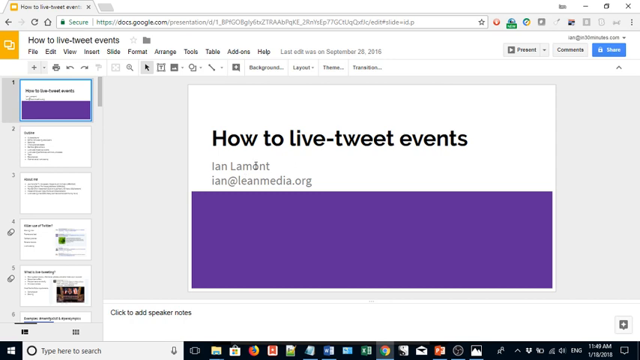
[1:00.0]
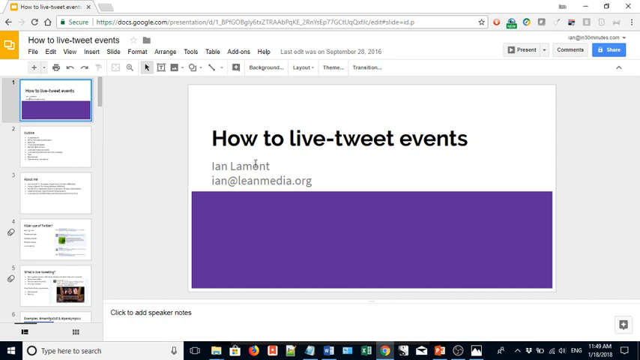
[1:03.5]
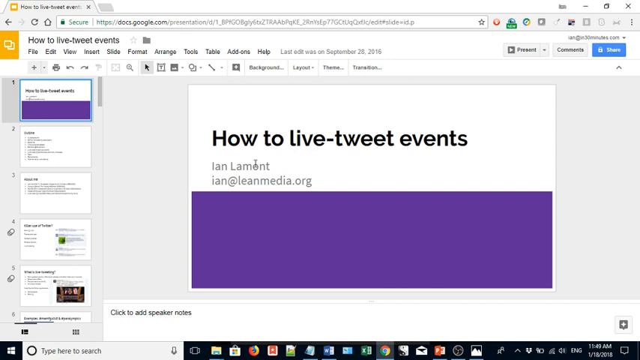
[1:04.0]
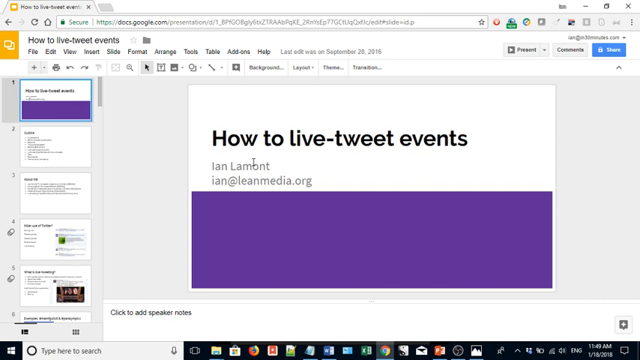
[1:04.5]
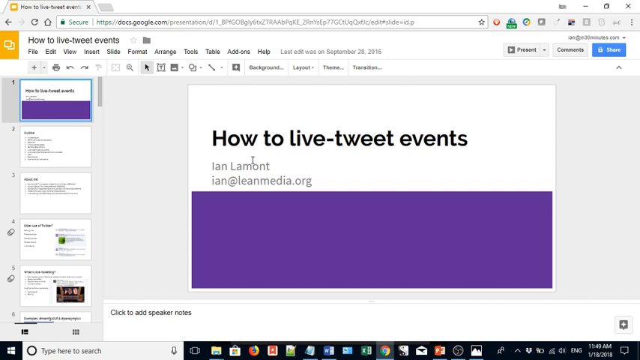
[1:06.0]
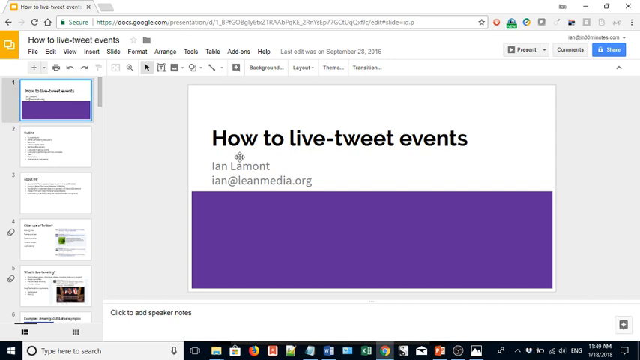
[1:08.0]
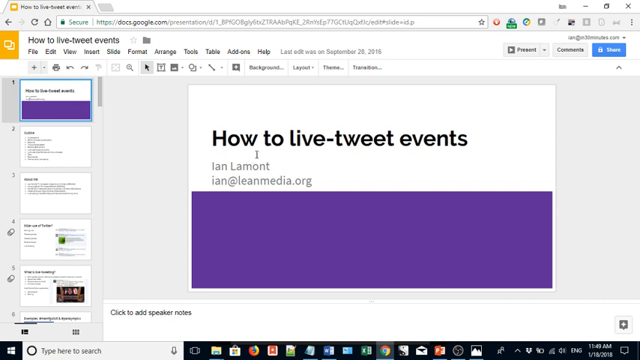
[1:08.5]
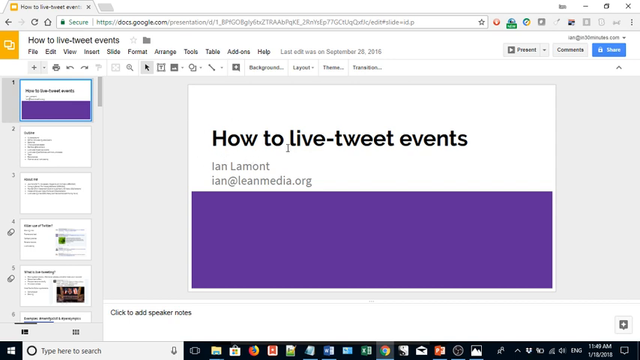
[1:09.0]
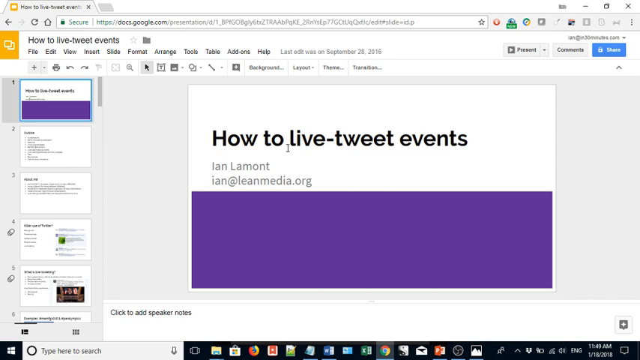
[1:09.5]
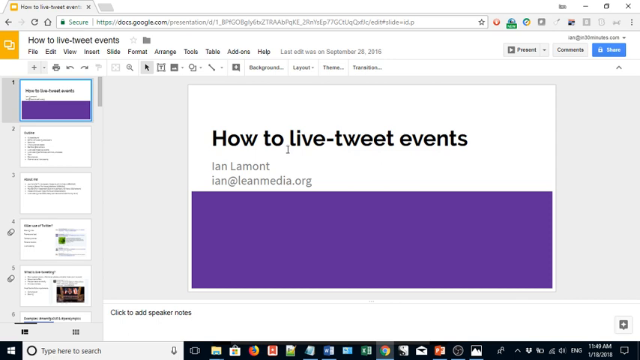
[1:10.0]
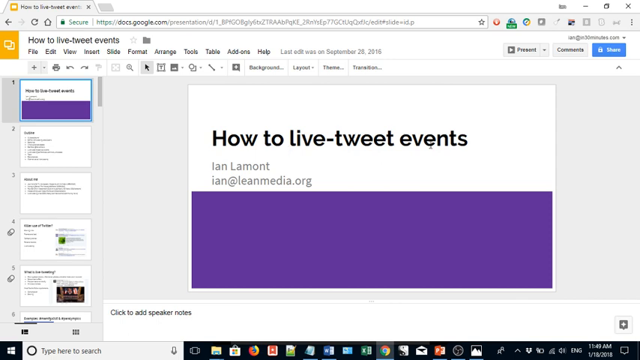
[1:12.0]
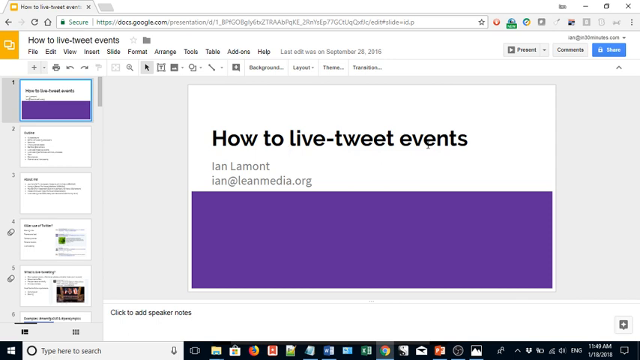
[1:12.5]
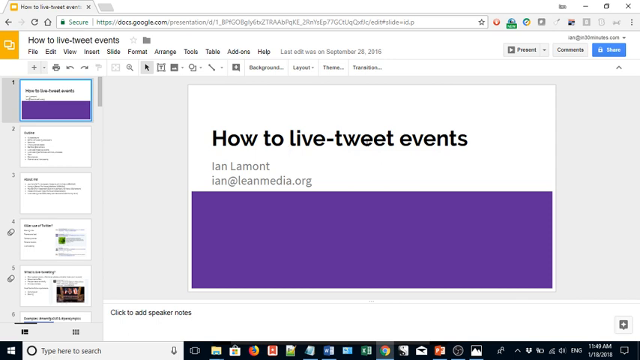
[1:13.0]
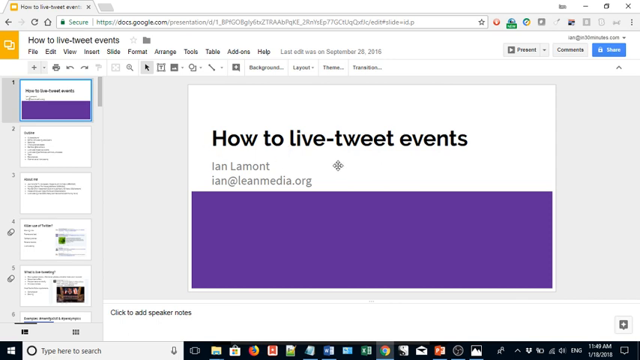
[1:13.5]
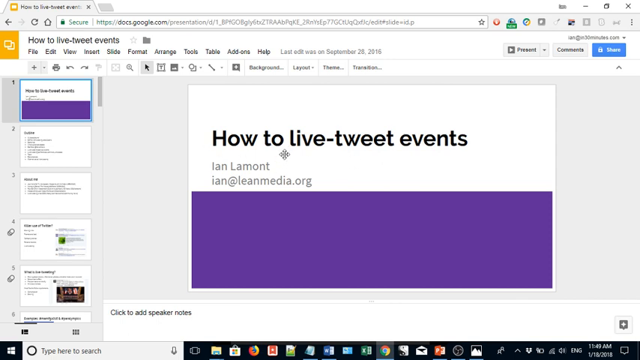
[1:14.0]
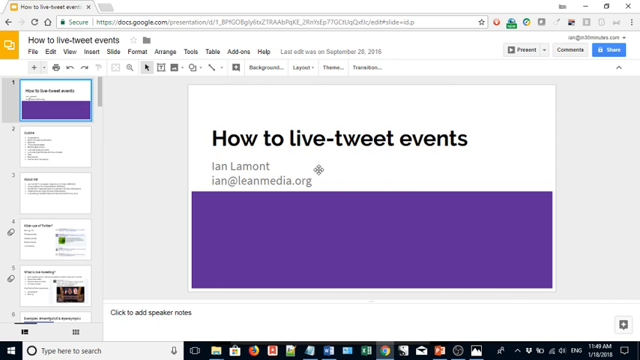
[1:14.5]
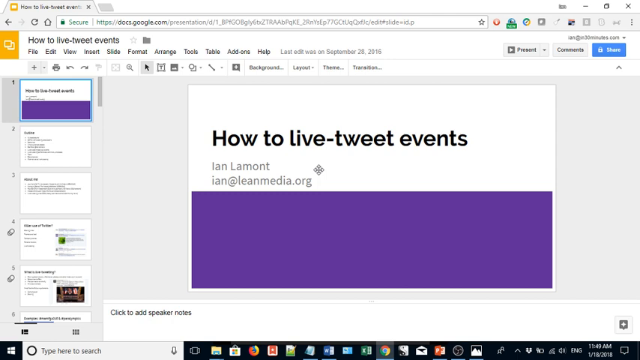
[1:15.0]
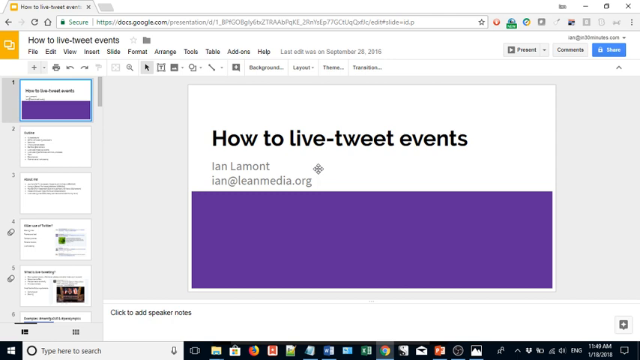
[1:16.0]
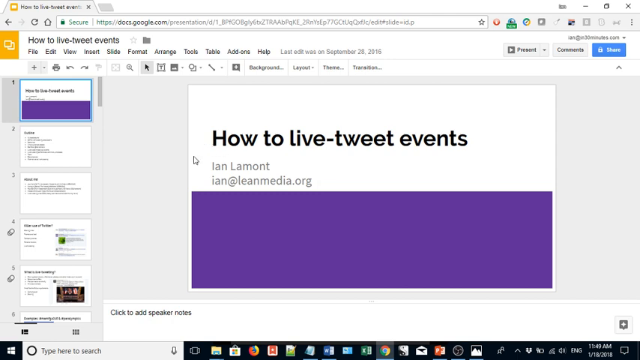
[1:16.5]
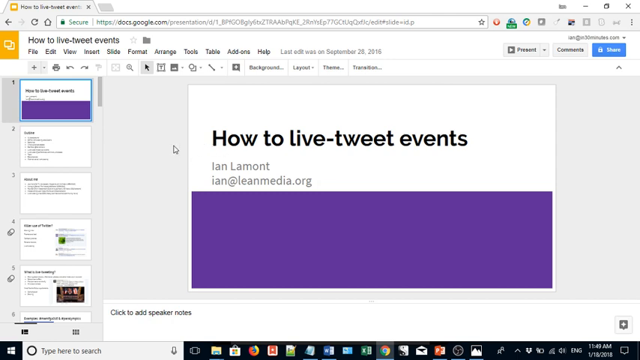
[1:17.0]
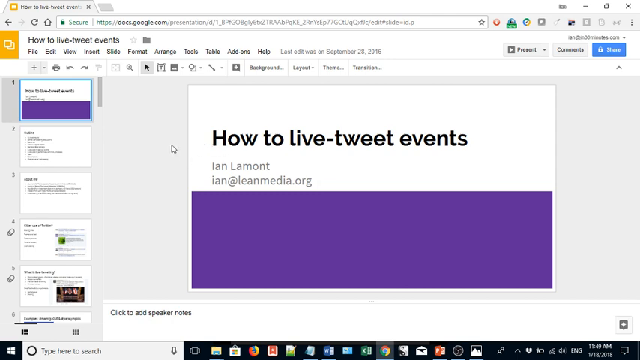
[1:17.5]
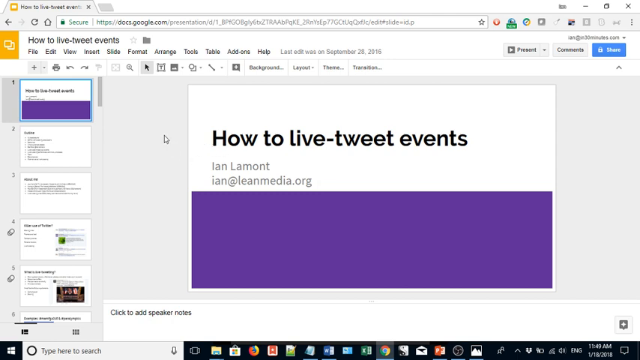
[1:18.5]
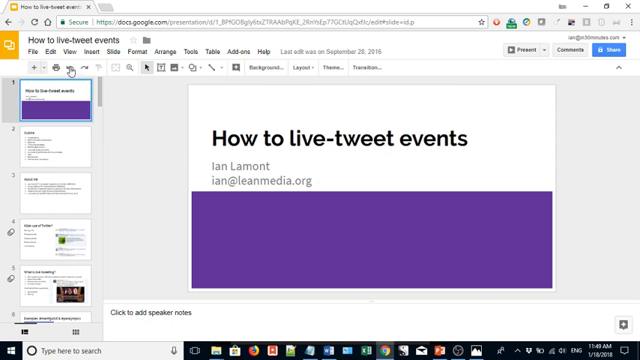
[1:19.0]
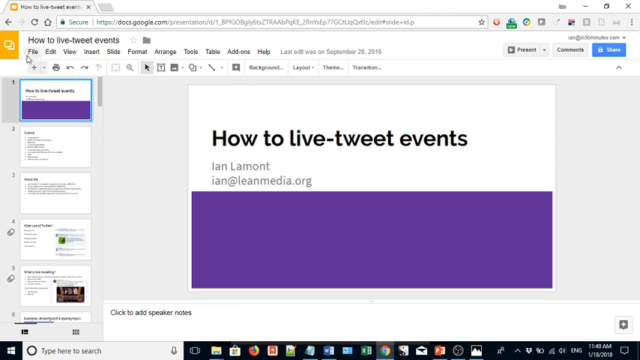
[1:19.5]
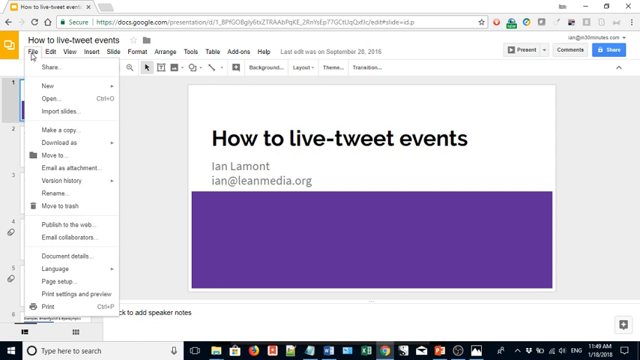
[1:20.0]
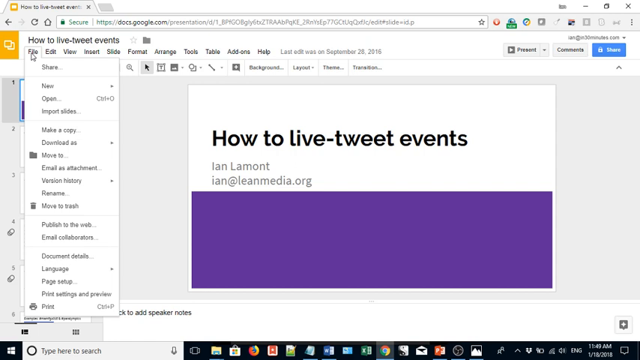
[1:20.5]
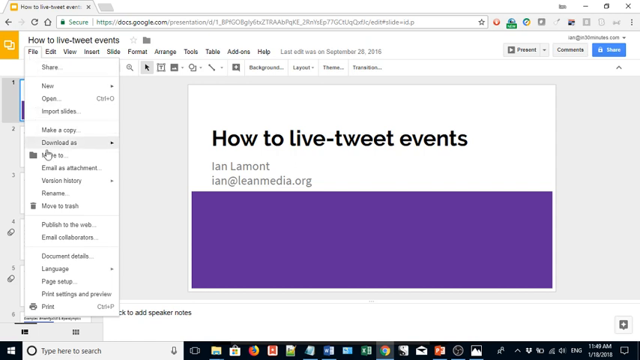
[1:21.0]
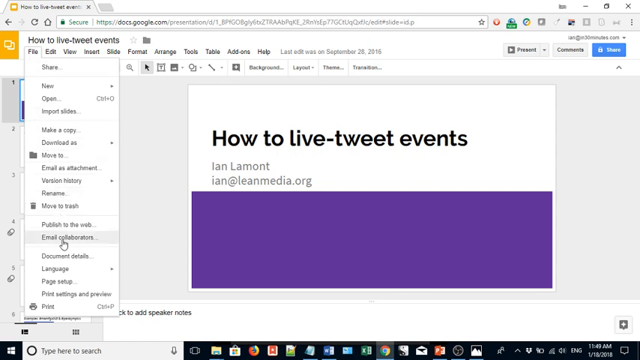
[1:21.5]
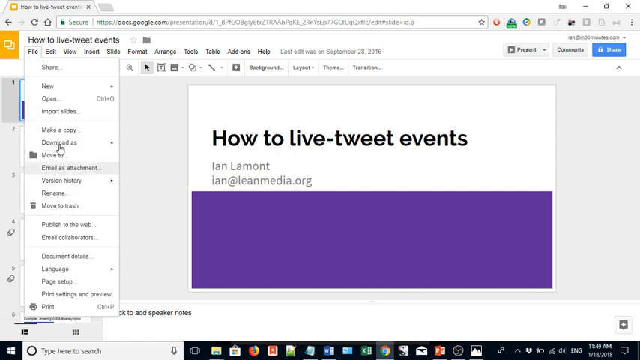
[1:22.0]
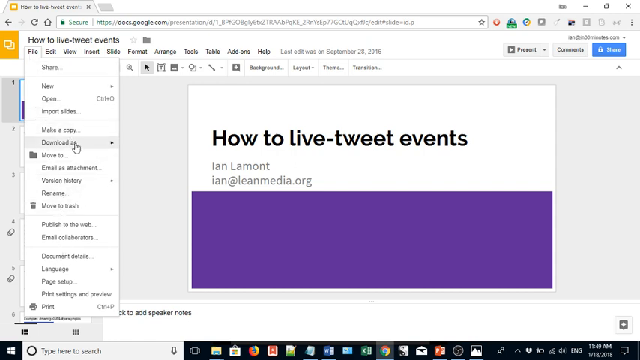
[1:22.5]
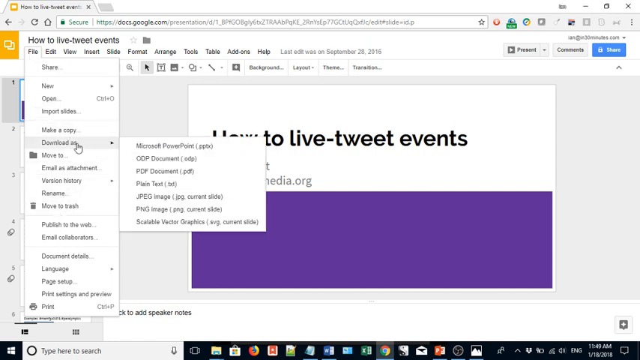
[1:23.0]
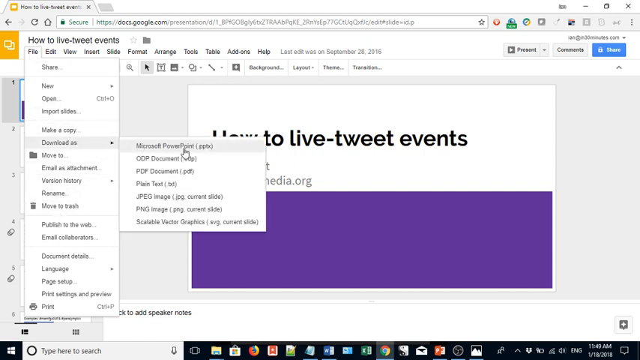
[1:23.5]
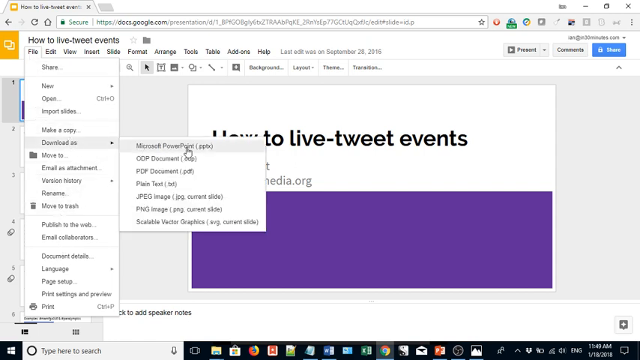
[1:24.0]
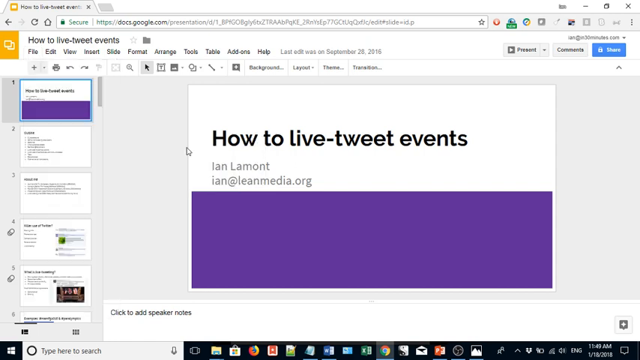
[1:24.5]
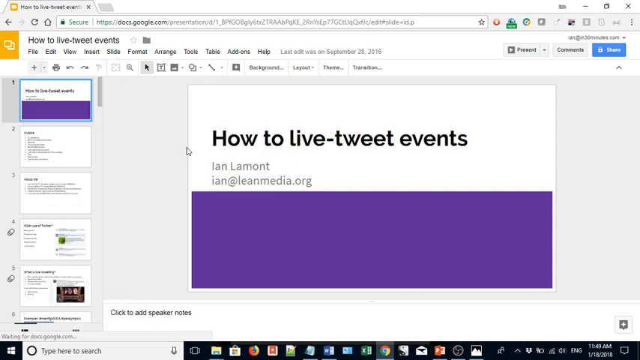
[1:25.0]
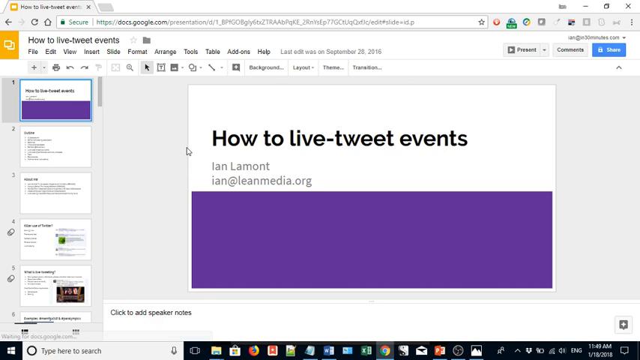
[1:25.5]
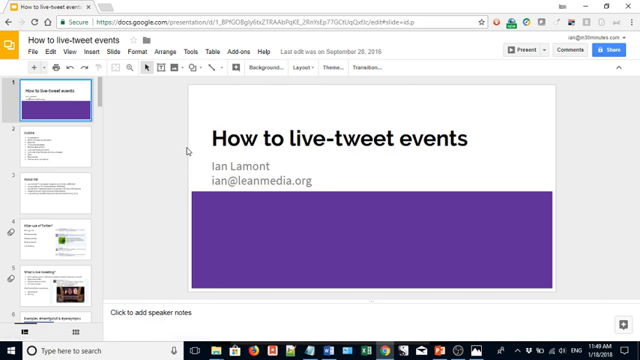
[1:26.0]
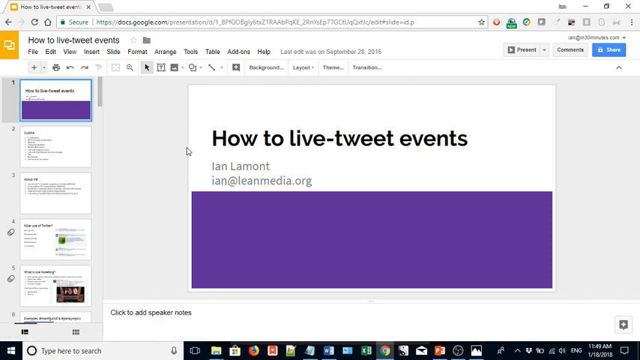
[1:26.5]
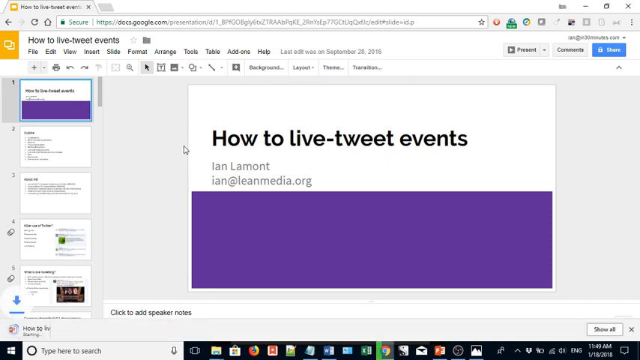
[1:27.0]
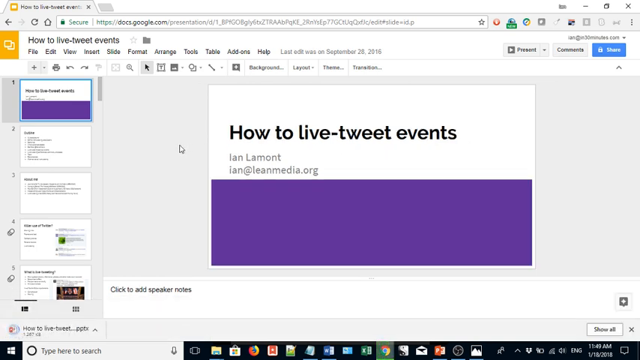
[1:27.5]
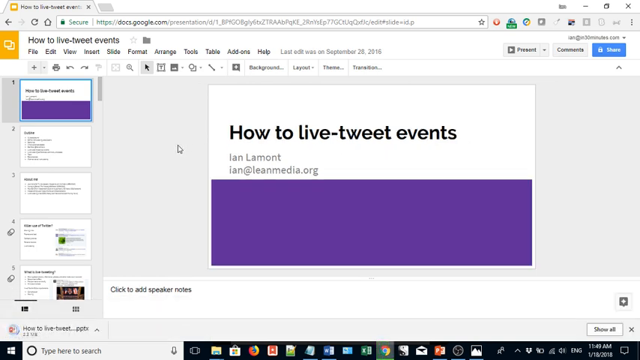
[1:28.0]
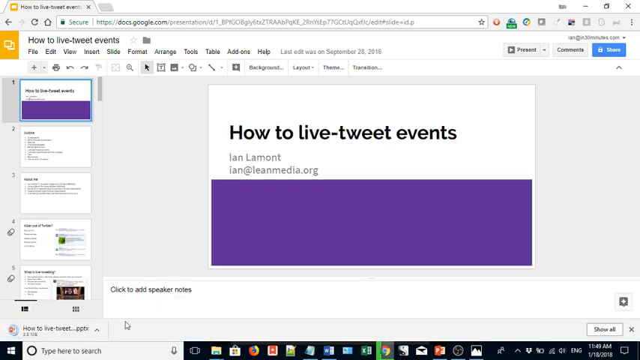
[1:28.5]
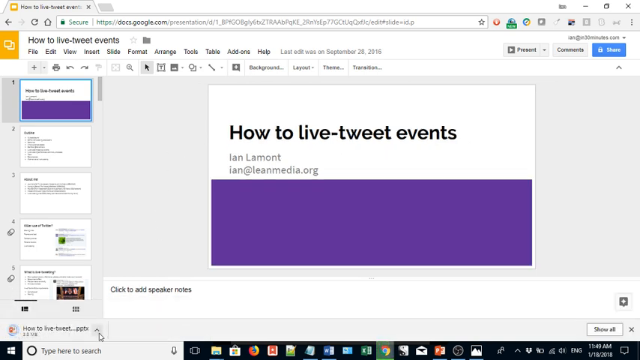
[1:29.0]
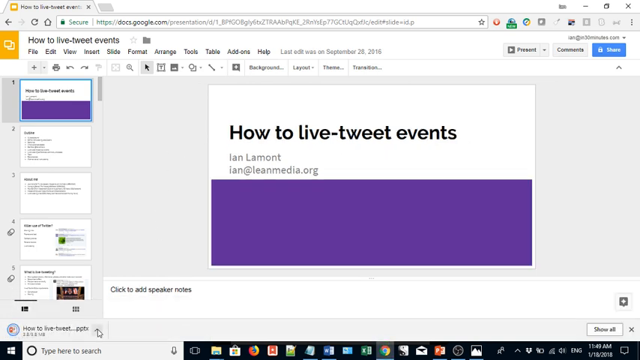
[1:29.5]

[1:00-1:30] A browser is open to a Google Docs presentation with the title "How to live-tweet events" in the top left corner. Slide one is open, with a white background, a heading at the top in black text reading "how to live-tweet events," and below it on the left, in smaller black text, "Ian Lamont" followed by the email "Ian@leanmedia.org." A large purple block covers the bottom half of the screen. The cursor clicks File in the top left menu, a menu drops down, and the user hovers over the "download as" option, which opens another menu to the right. The user selects Microsoft PowerPoint. A gray rectangular box then pops up at the bottom of the browser showing that a PowerPoint file titled "how to live-tweet..." has been downloaded.